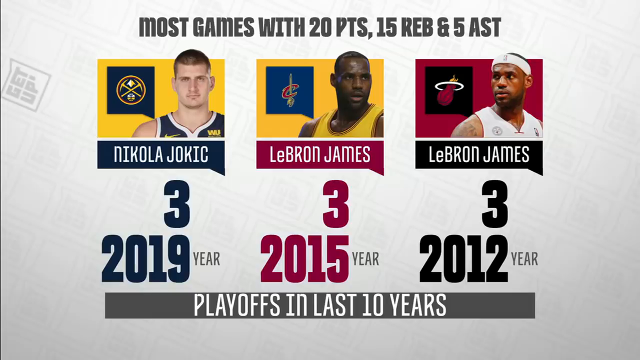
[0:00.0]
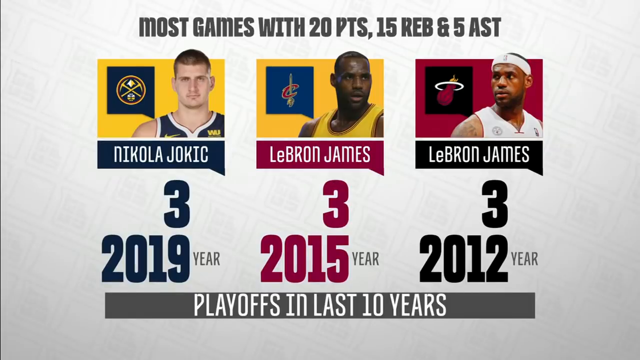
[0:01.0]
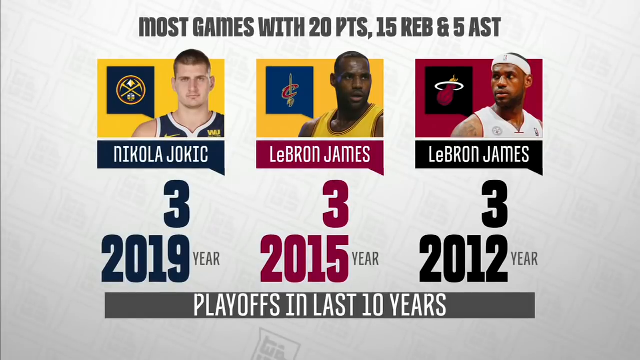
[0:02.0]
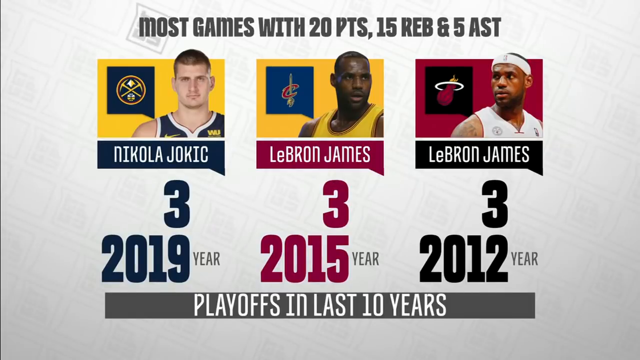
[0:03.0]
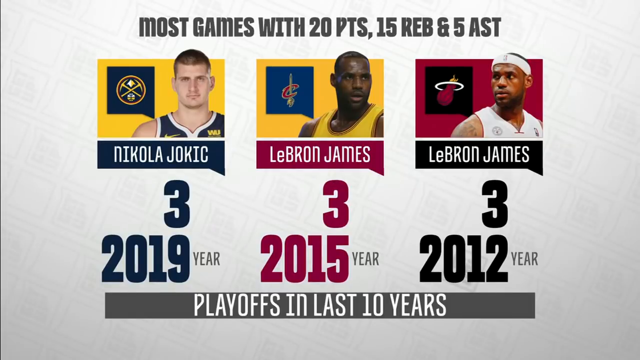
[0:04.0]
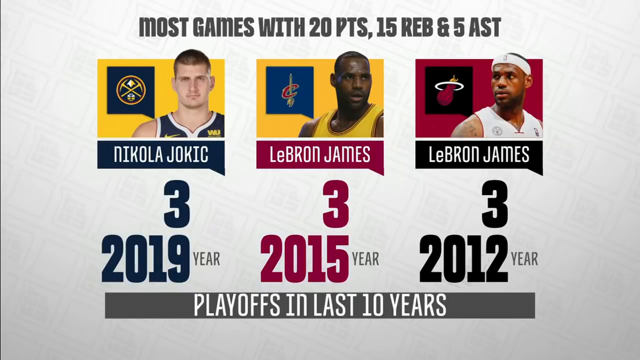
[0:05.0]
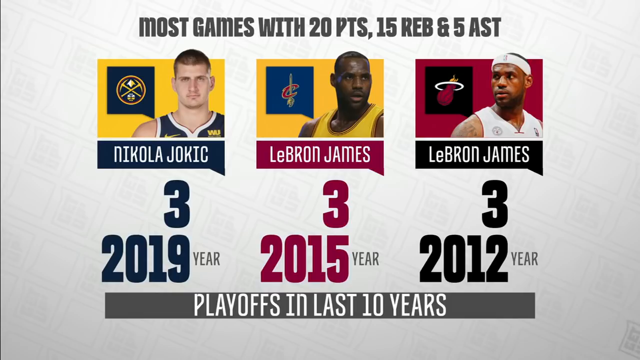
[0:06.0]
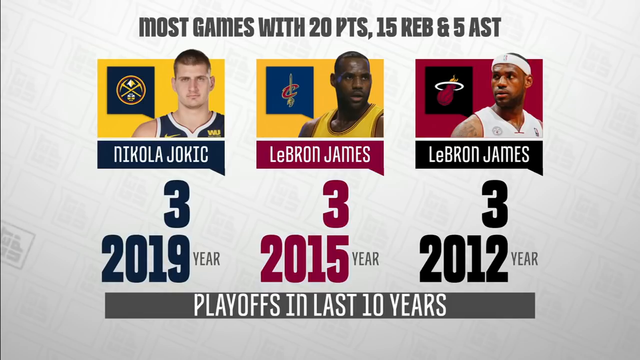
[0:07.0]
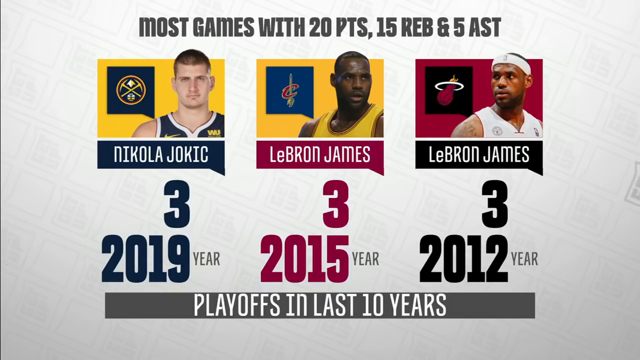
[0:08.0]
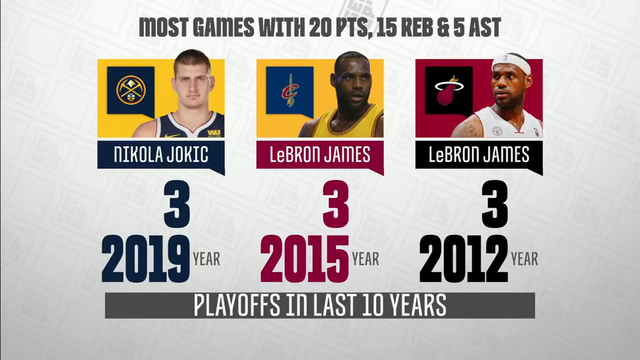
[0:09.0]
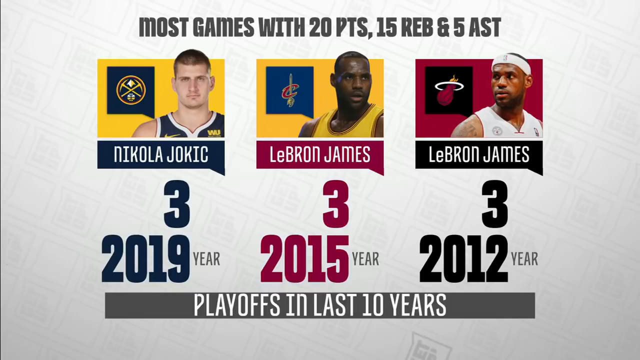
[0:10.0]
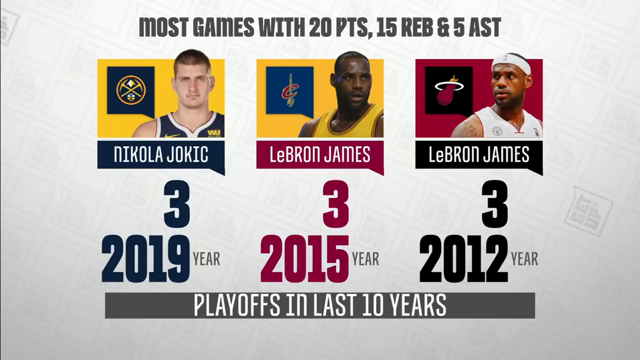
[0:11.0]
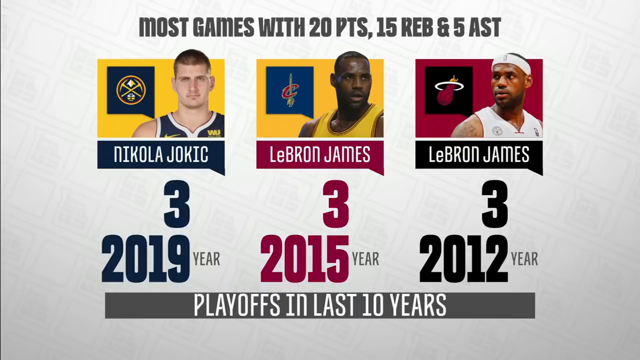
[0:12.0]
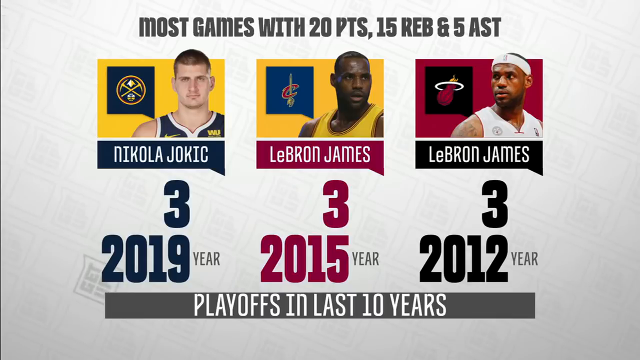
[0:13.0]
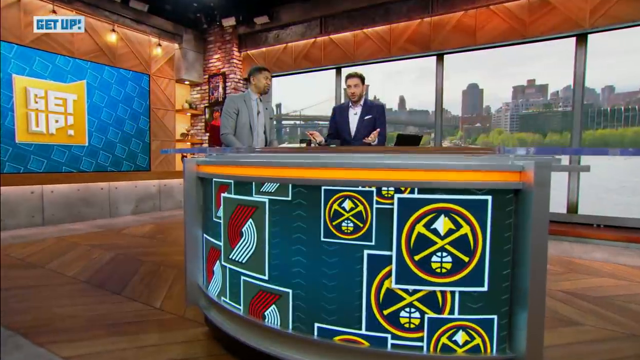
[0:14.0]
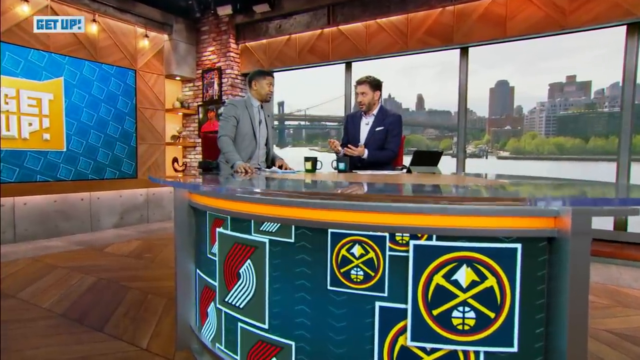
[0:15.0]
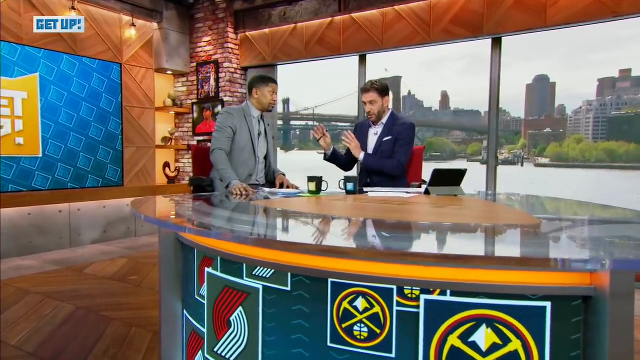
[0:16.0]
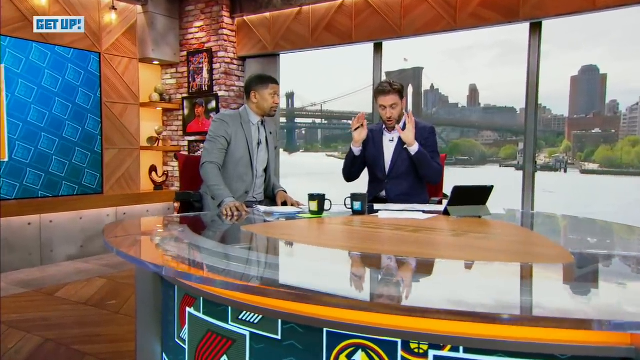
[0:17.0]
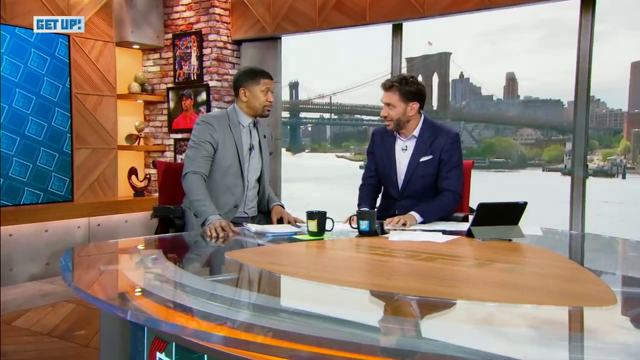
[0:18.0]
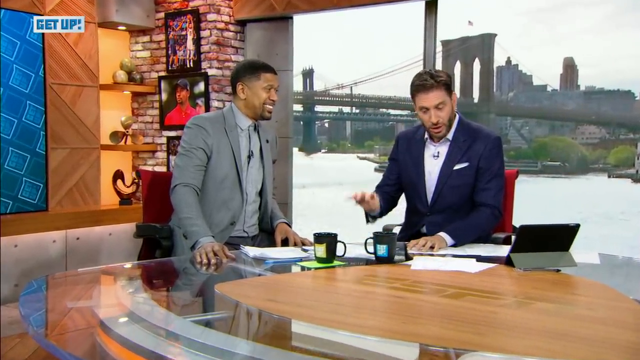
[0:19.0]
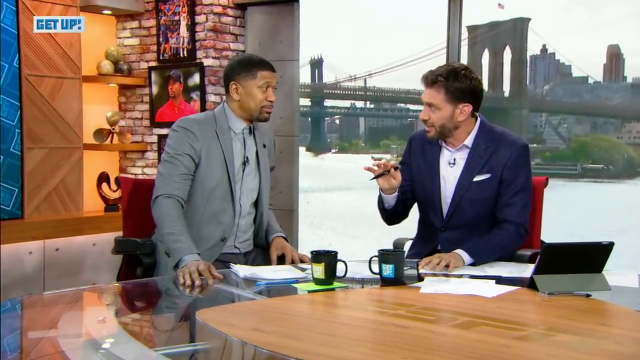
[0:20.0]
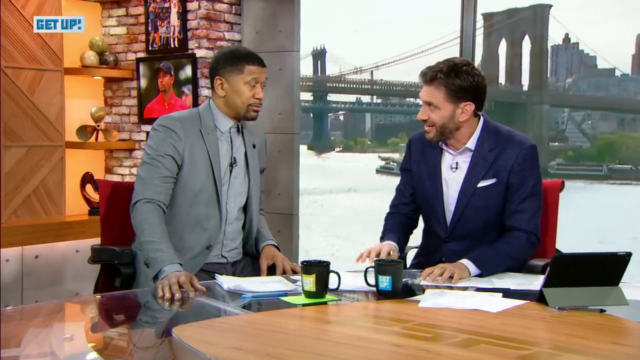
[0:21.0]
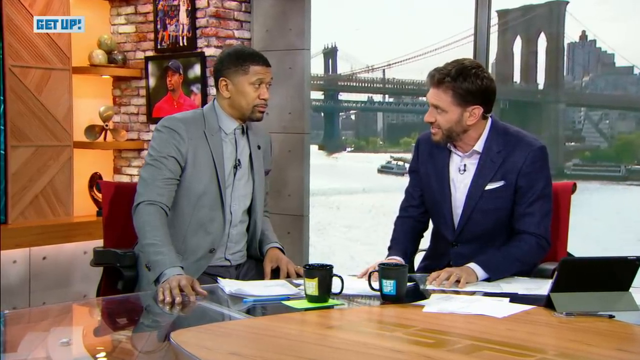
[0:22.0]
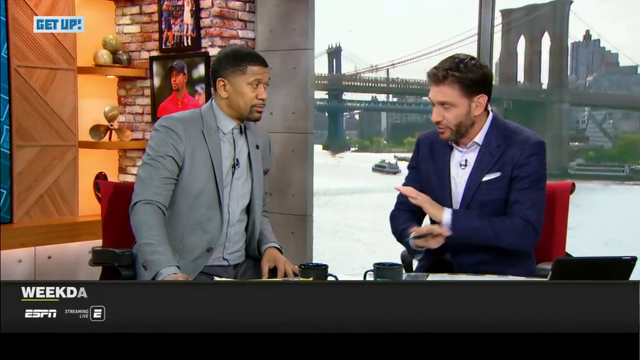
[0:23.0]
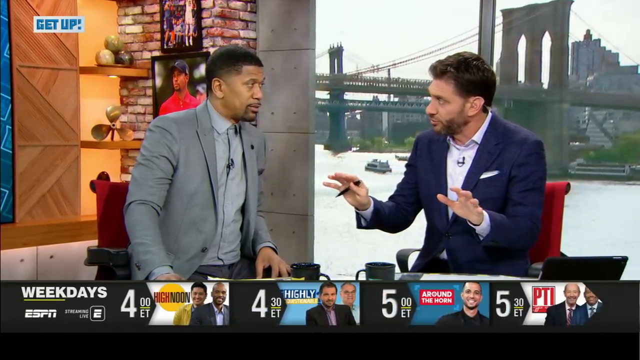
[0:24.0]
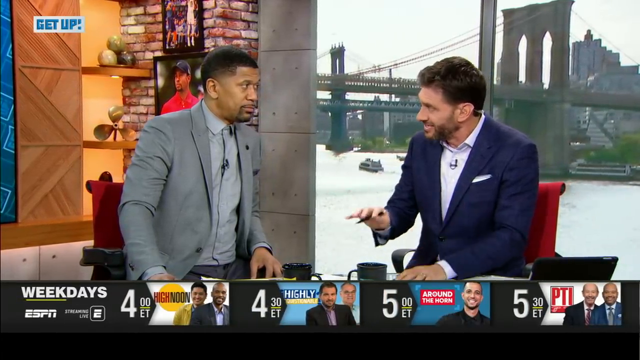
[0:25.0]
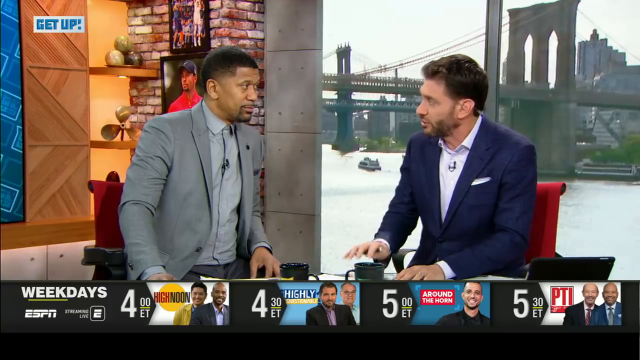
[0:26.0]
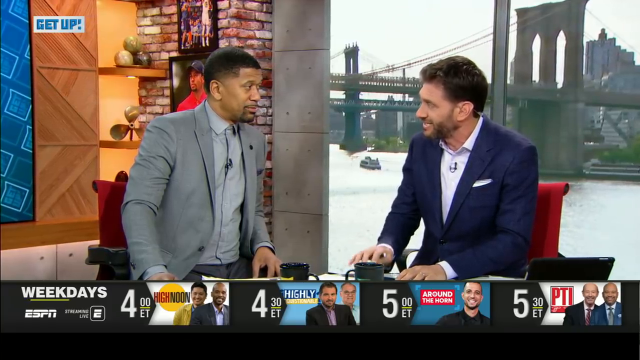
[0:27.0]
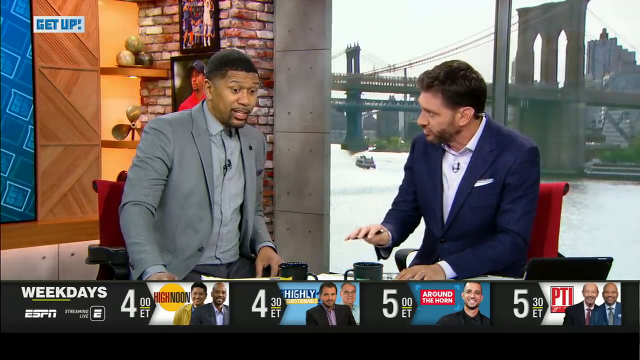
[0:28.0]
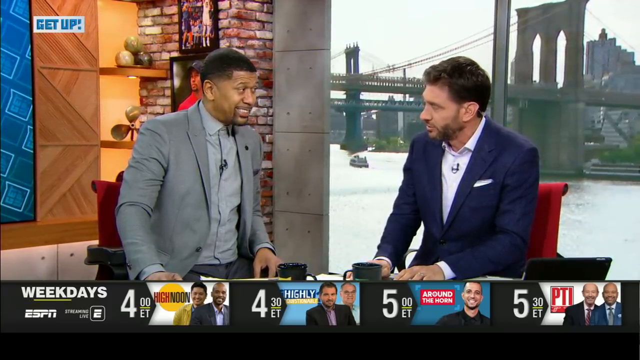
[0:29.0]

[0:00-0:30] A graphic with a white background has centered text at the top reading "most games with 20 points, 15 REB, and 5 AST". Below it, still in the top half of the screen and centered, are three boxes featuring individual players. The left box has a yellow background and a name bar with a black background at its bottom. The person in it is a white man wearing a black vest with white trim around the sleeve and the collar, and there is a logo next to him, presumably of the team he played for. His name bar reads "Nikola Jokic". The other two boxes both show "LeBron James". Below Nikola Jokic, in black text matching the name bar's background, is a "3" and below that "2019" in large font. Below the central LeBron James image is the number "3" and below that "2015". In the second LeBron James box, in black font matching the name bar's background, is "3" and below that "2012".